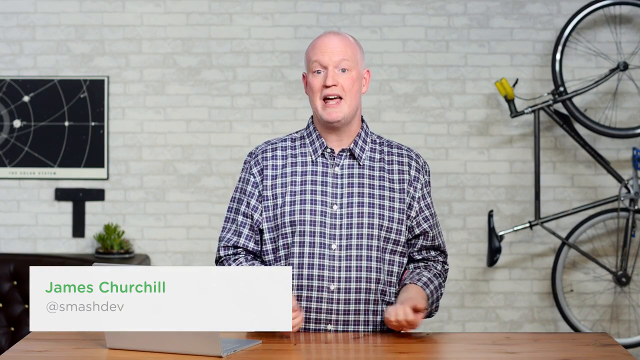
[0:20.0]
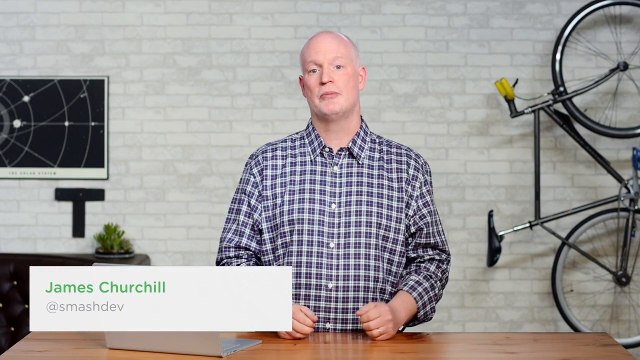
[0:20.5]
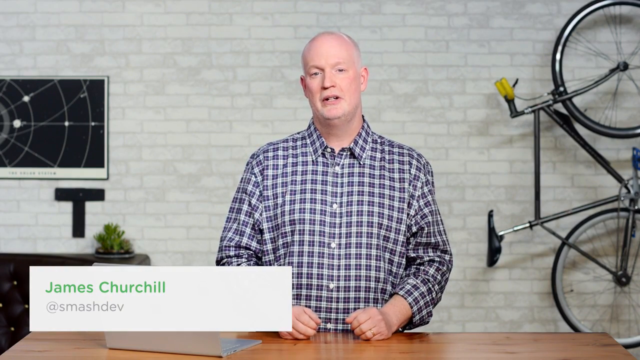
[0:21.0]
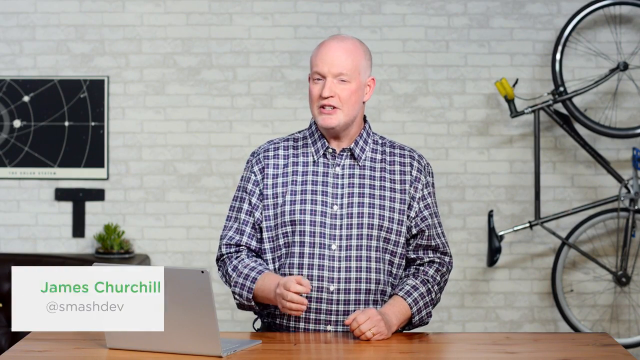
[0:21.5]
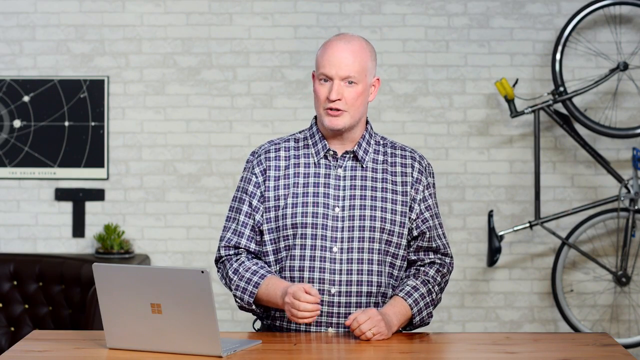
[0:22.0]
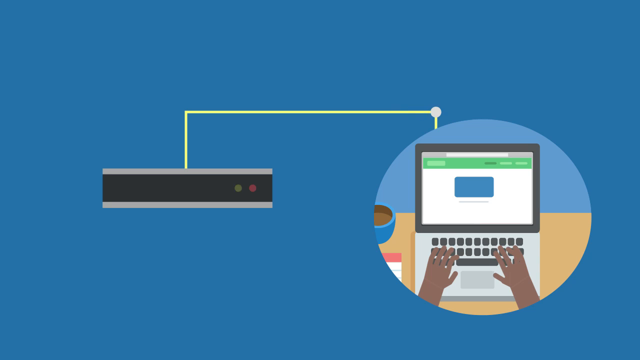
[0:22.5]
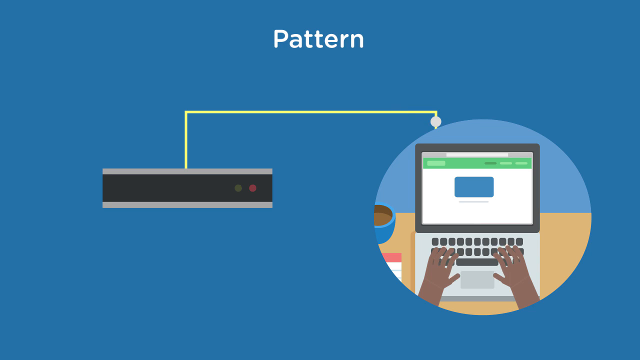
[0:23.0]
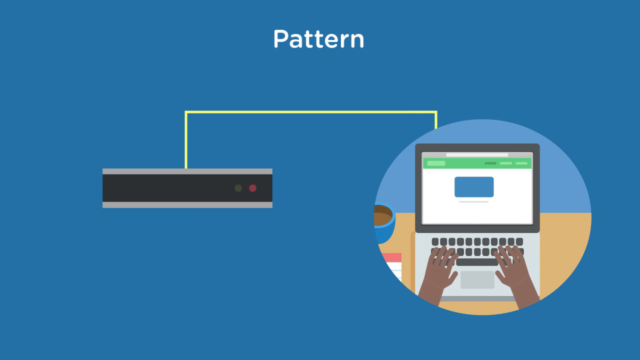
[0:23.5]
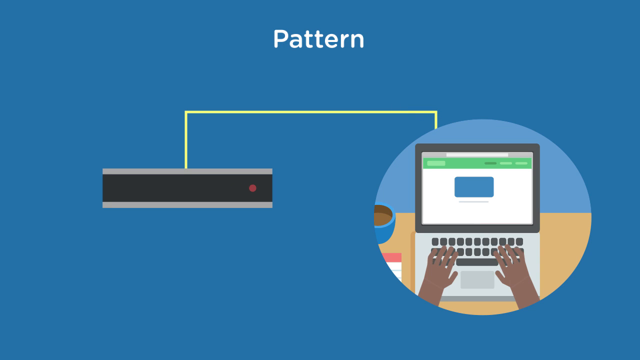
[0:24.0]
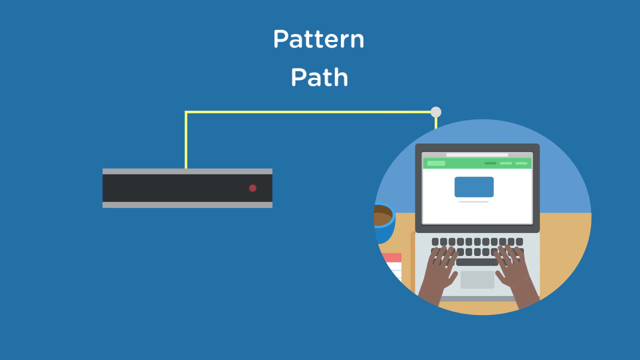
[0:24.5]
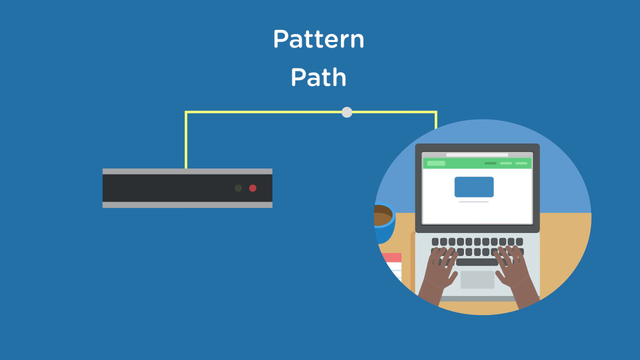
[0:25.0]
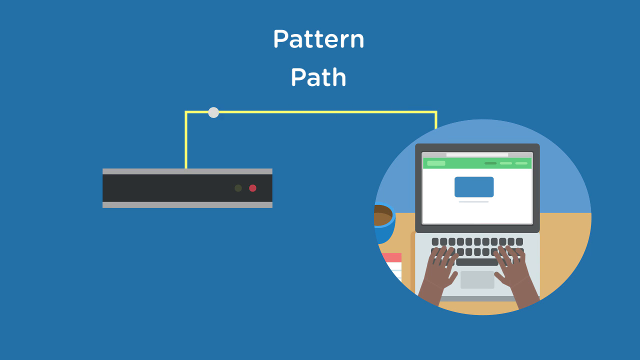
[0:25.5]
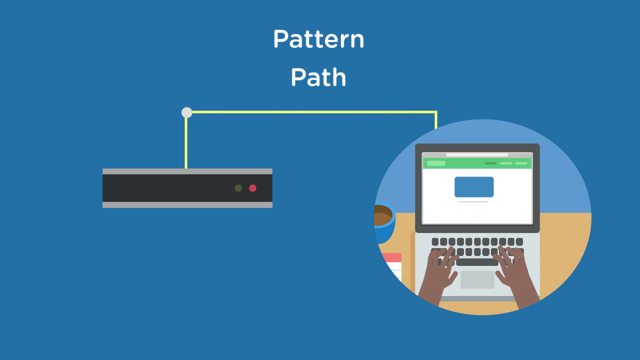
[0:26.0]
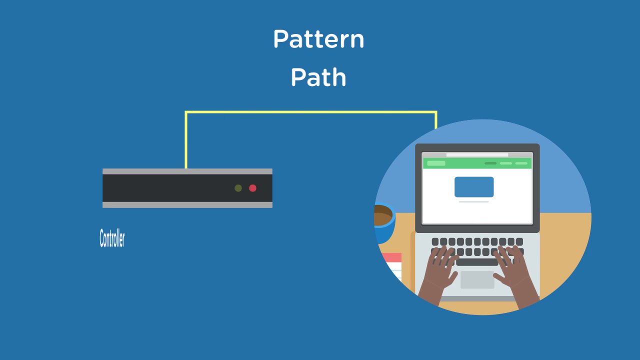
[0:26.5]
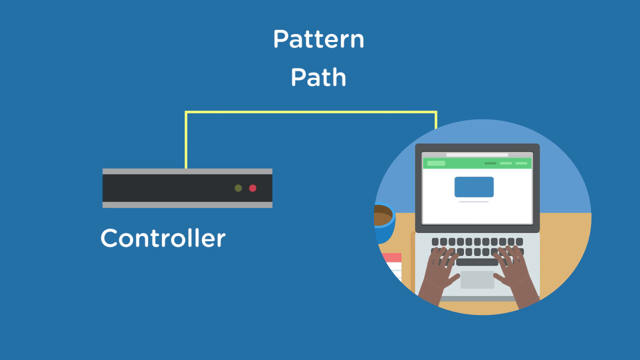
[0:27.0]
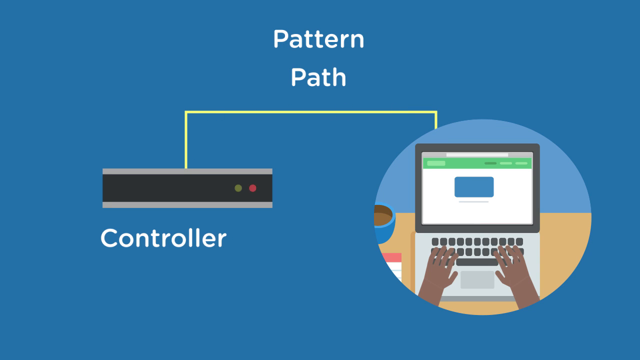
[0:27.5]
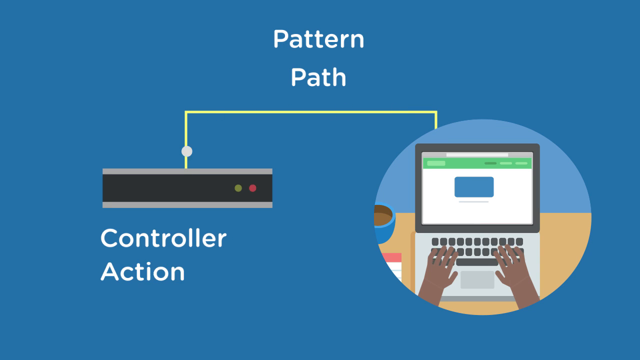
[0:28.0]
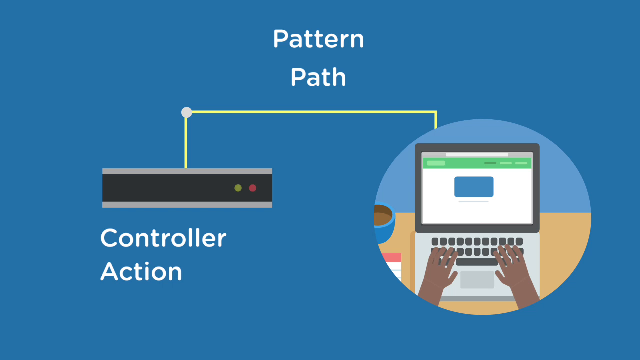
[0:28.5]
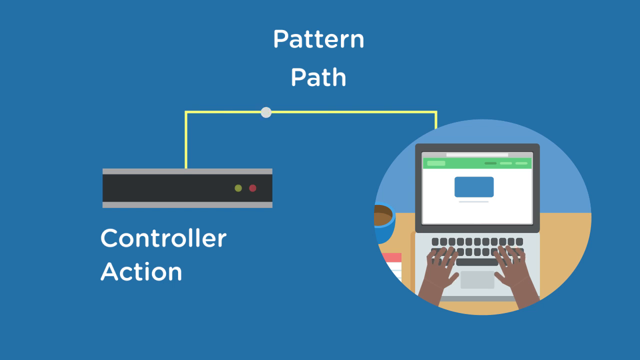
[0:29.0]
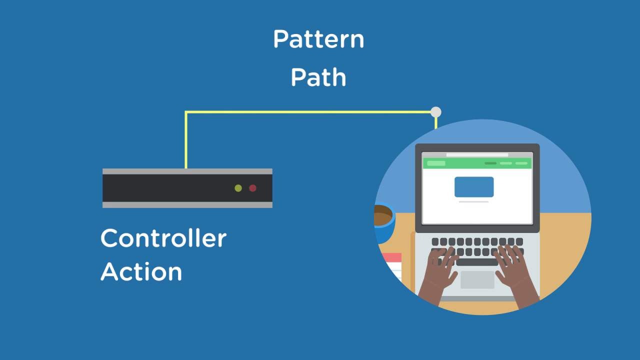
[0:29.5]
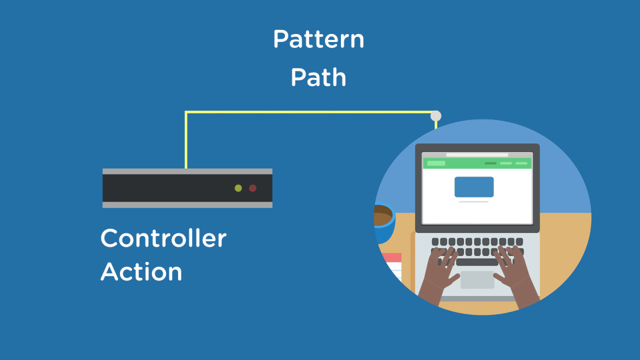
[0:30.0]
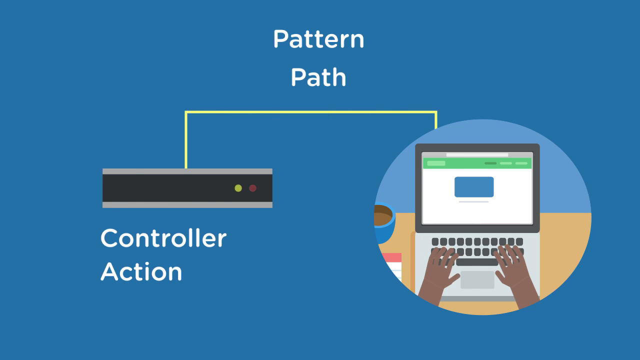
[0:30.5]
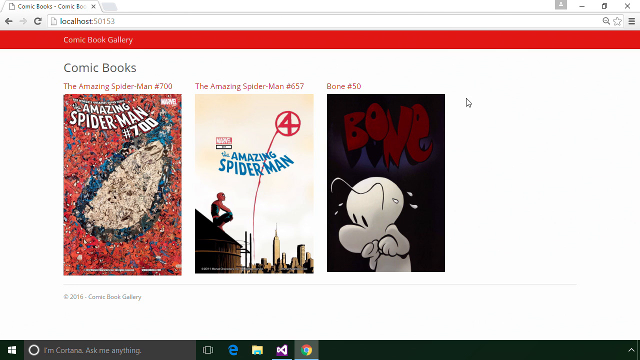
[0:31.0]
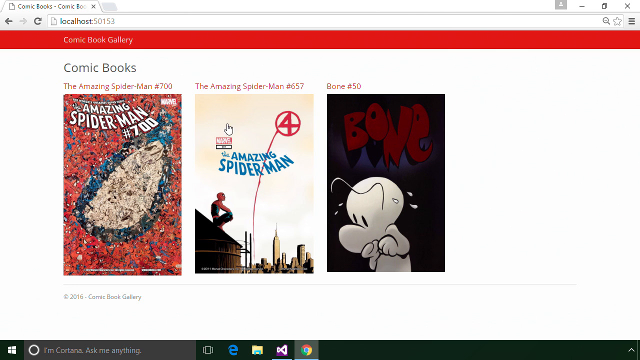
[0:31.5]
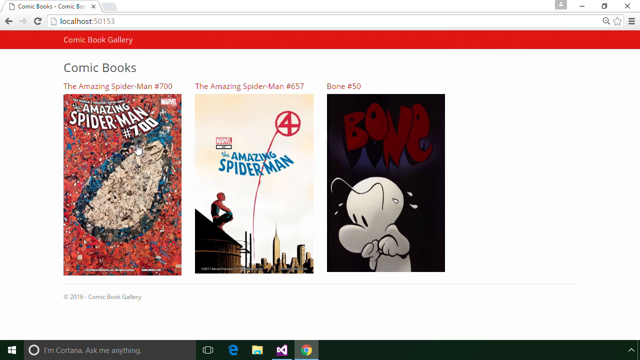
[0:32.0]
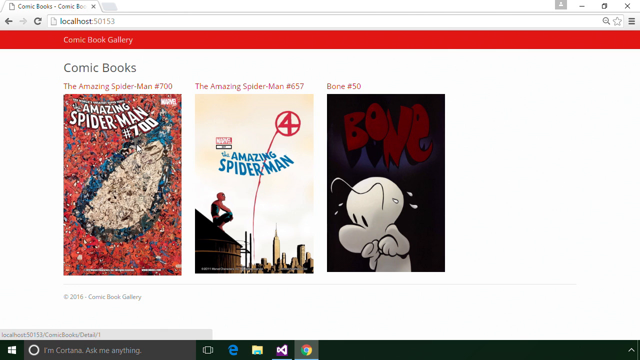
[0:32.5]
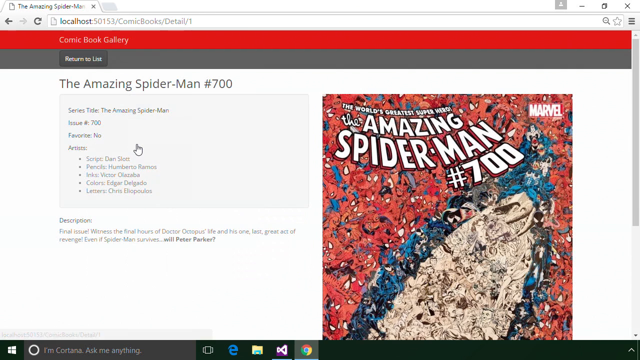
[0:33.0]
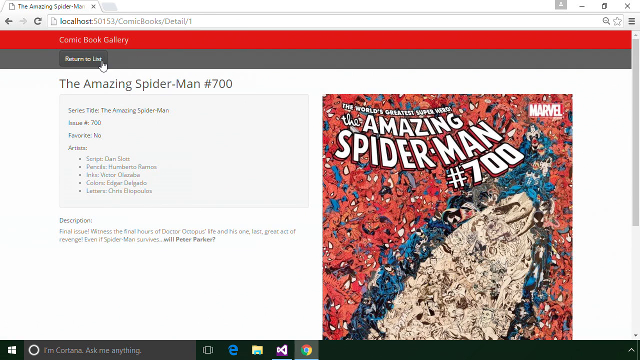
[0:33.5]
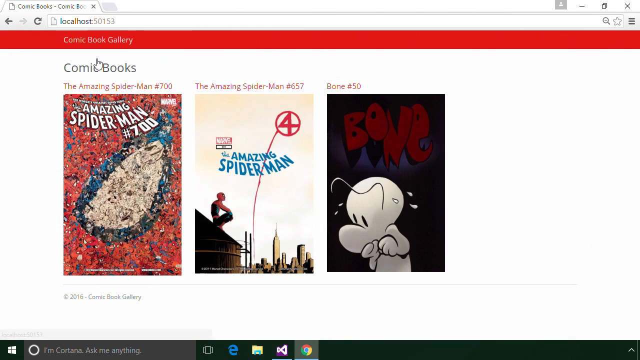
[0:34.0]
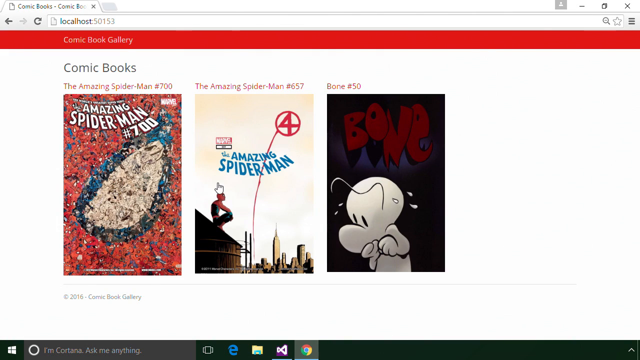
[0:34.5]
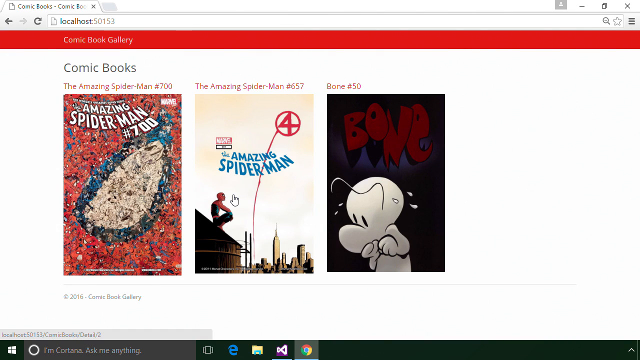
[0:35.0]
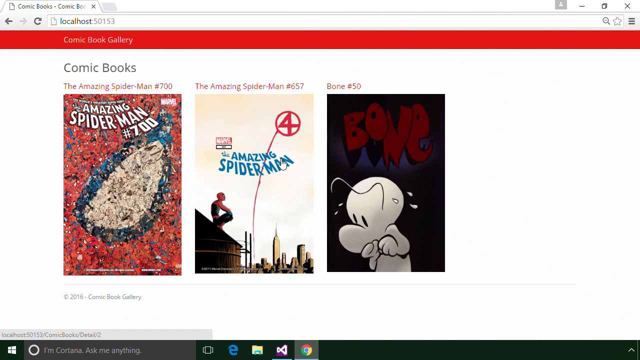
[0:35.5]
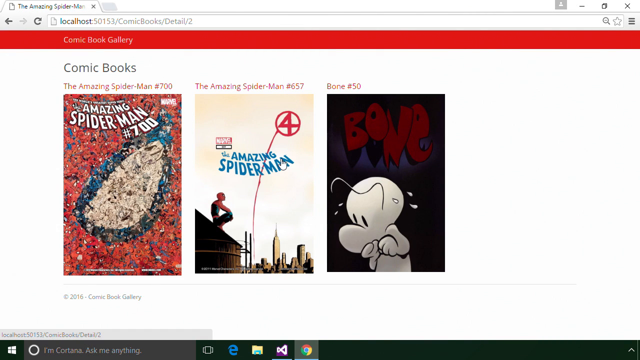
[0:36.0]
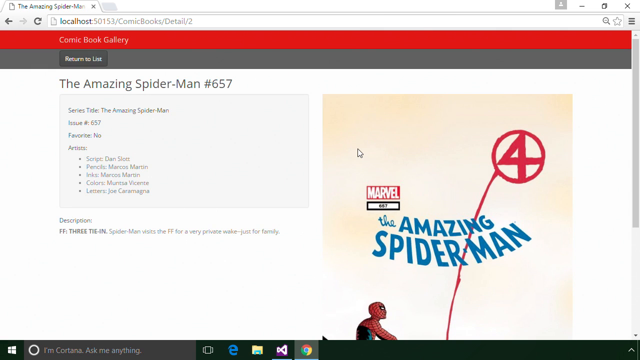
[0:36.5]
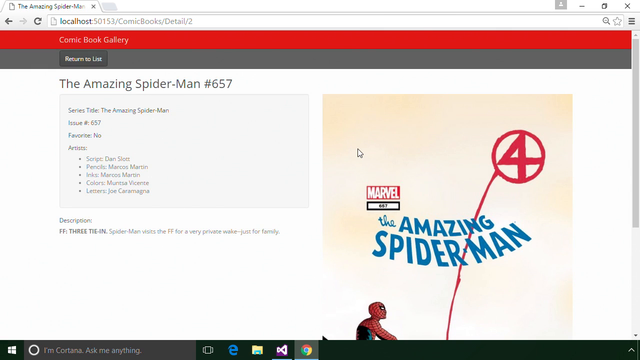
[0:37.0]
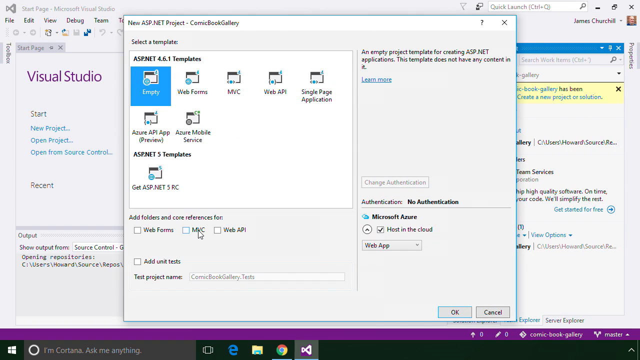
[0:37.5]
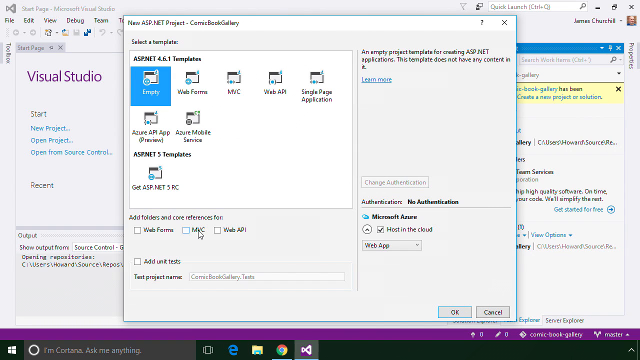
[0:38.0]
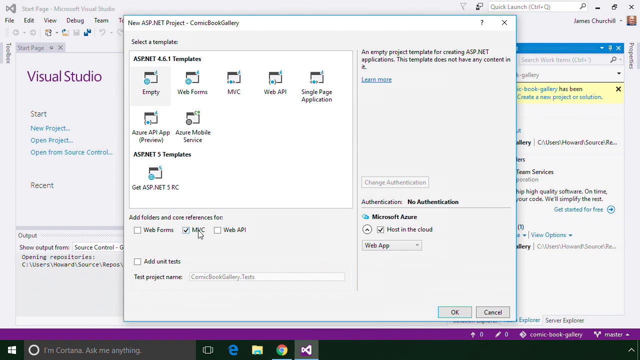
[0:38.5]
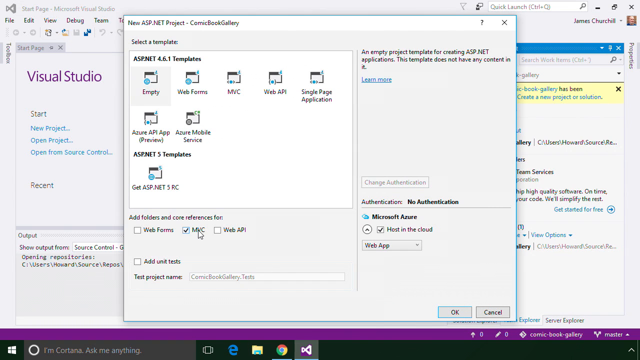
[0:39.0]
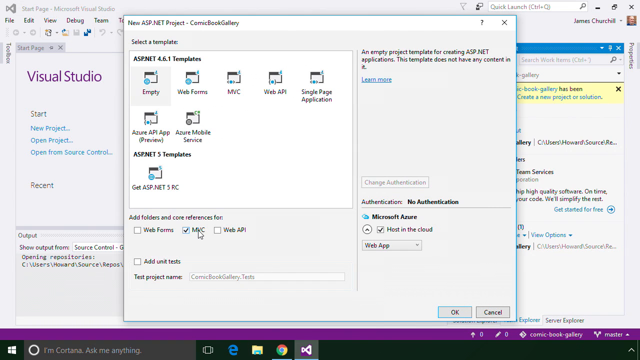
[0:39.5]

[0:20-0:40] A man named James Chachou explains a pattern path between a device and a laptop; the controller is chained to the laptop. Some comic books or games are shown, including an Amazing Spider-Man item and a comic book gallery. Spider-Man is clicked, and the process is then done on the laptop, going from the controller to the laptop. James Chachou is shown explaining; there is a bicycle behind him, the wall is a brick wall, and he is wearing a boxed blue and white shirt.